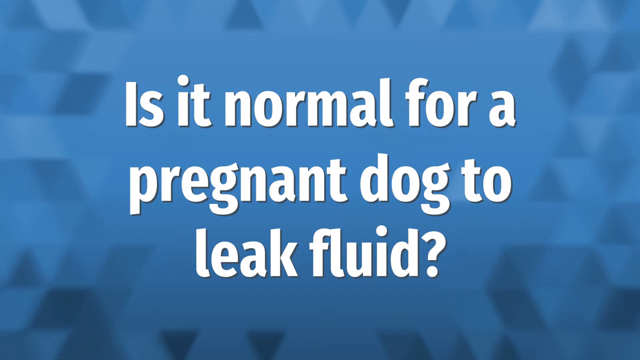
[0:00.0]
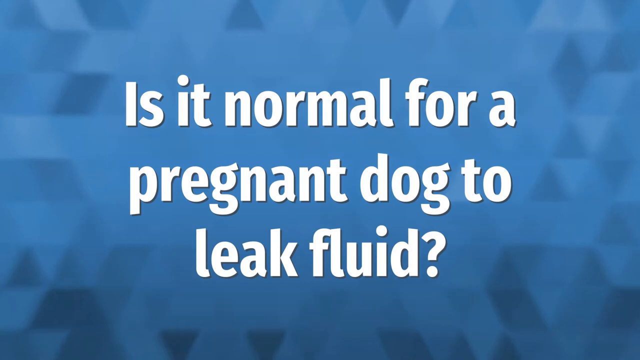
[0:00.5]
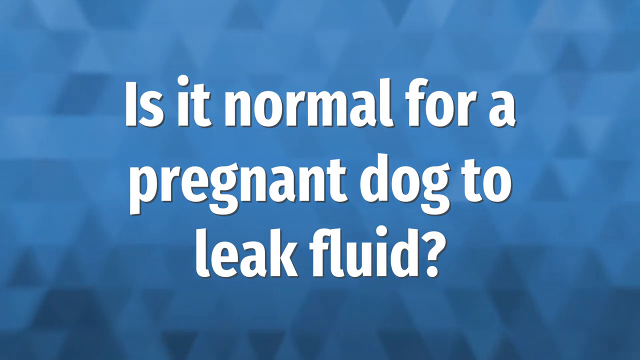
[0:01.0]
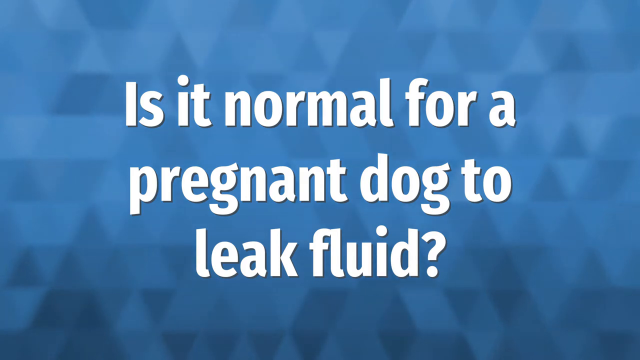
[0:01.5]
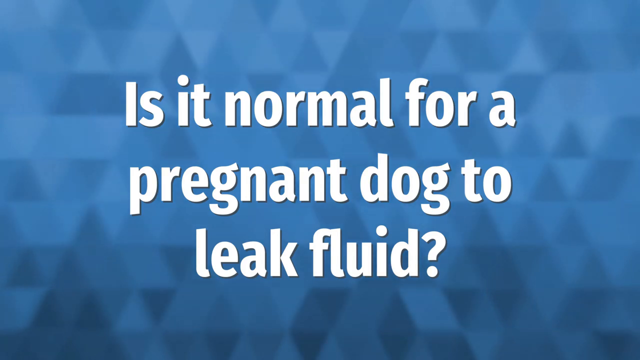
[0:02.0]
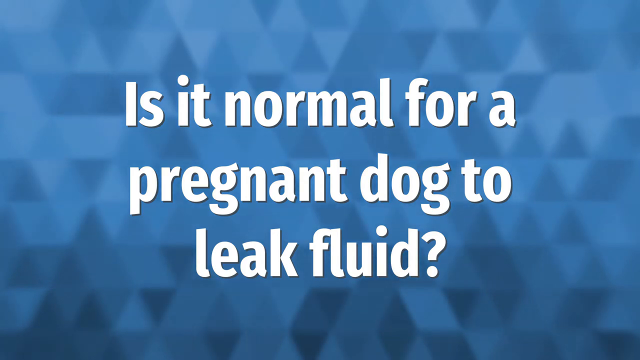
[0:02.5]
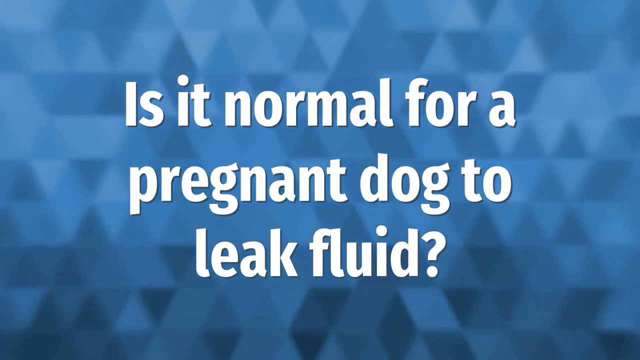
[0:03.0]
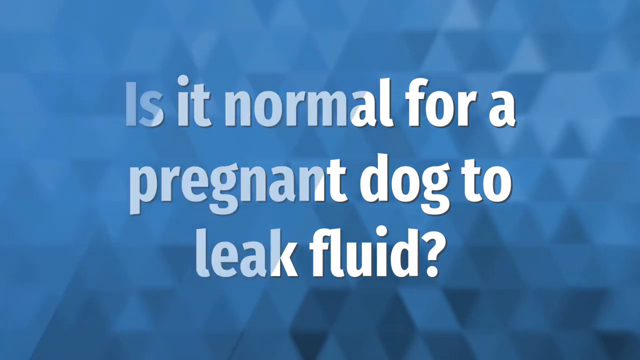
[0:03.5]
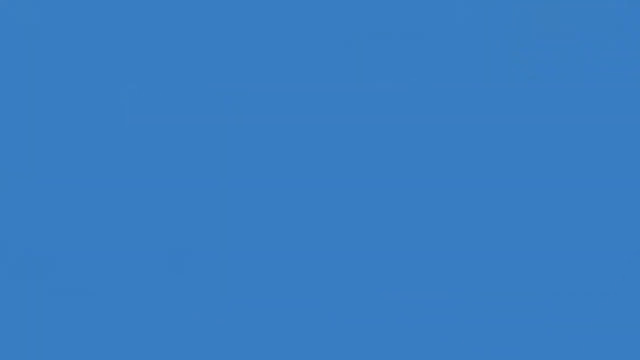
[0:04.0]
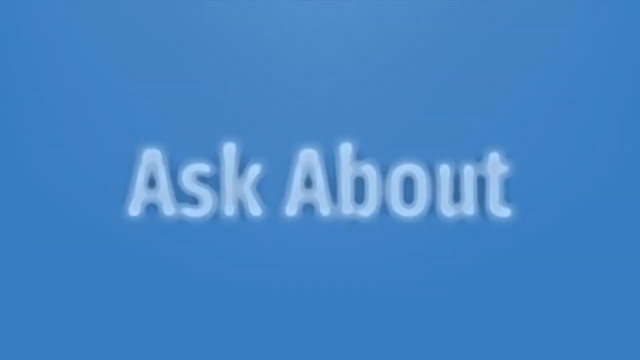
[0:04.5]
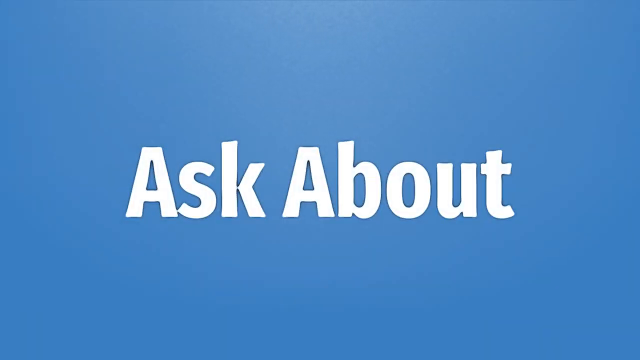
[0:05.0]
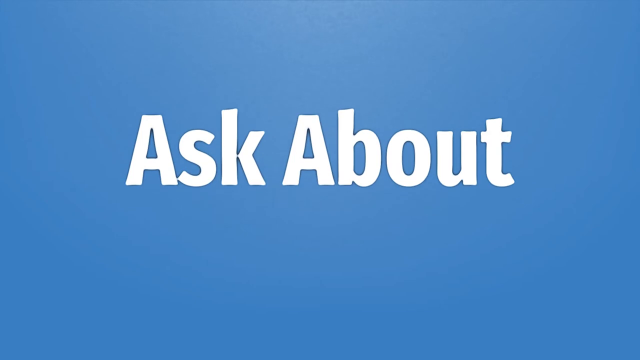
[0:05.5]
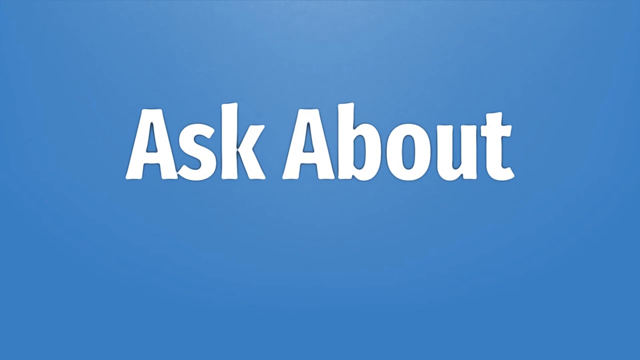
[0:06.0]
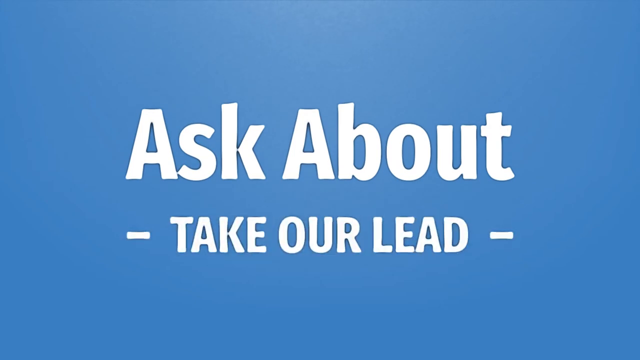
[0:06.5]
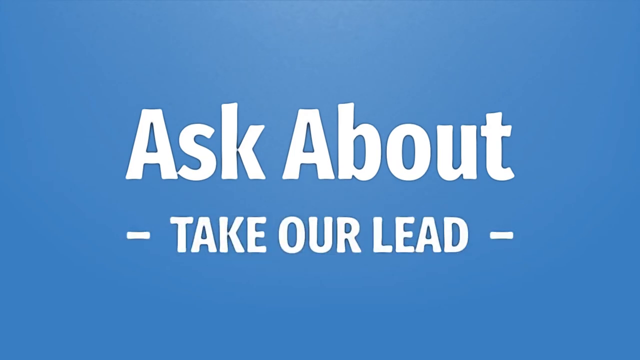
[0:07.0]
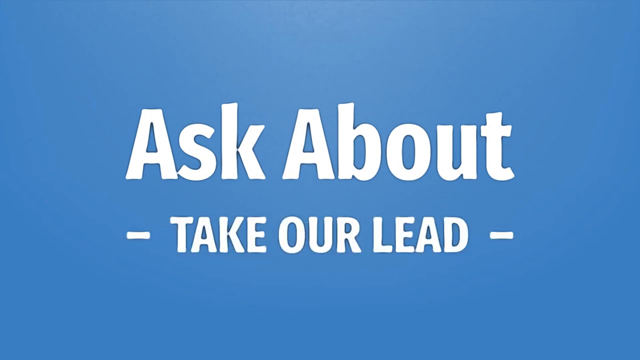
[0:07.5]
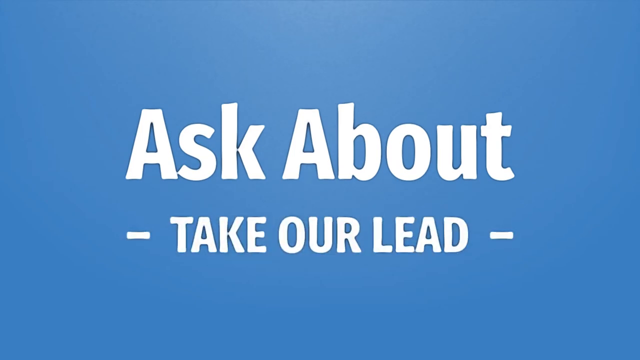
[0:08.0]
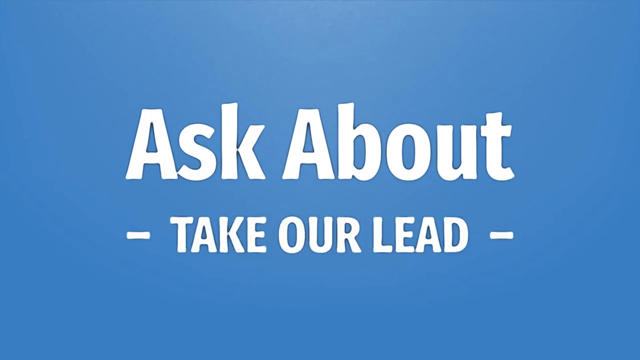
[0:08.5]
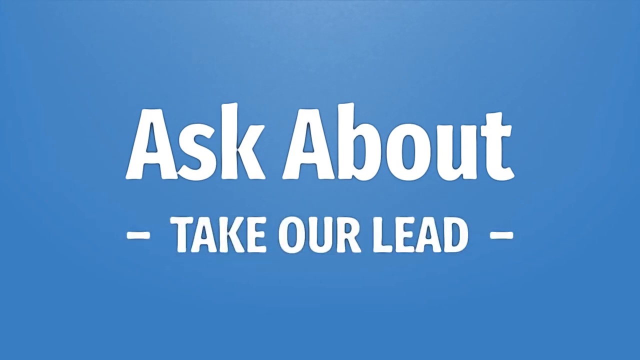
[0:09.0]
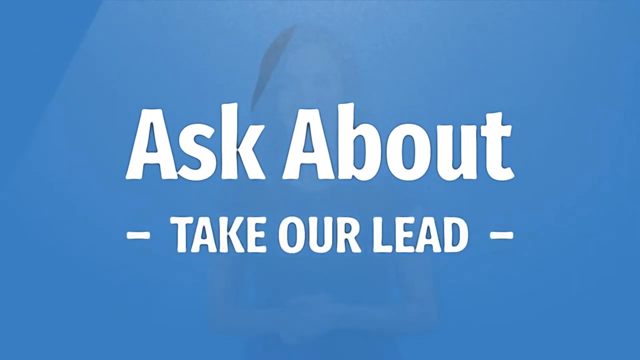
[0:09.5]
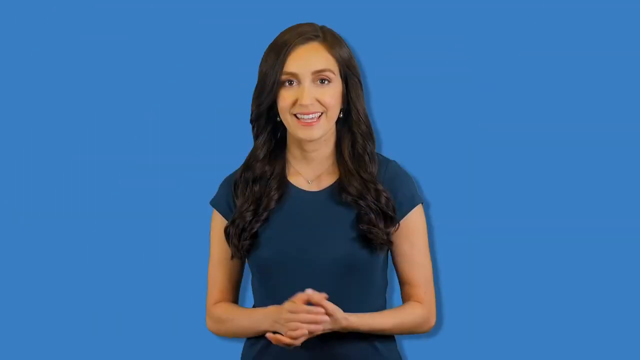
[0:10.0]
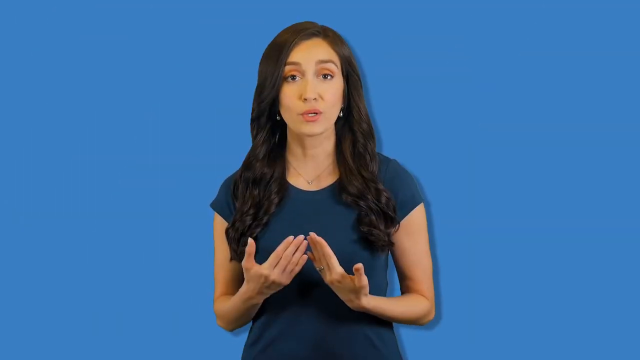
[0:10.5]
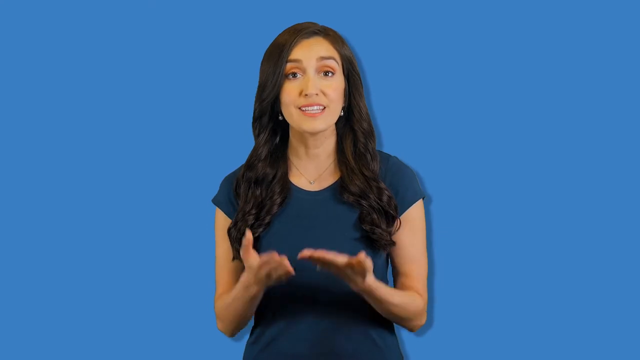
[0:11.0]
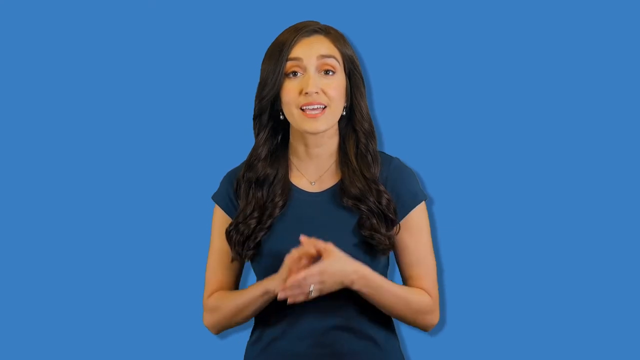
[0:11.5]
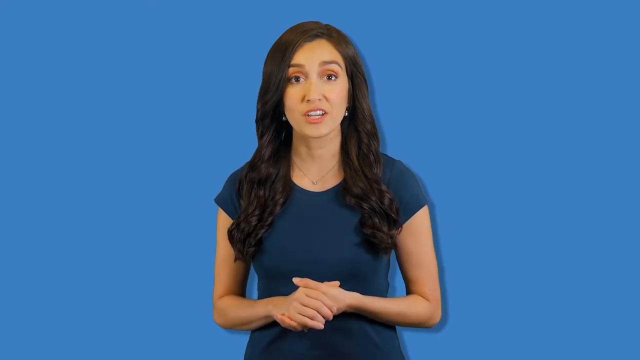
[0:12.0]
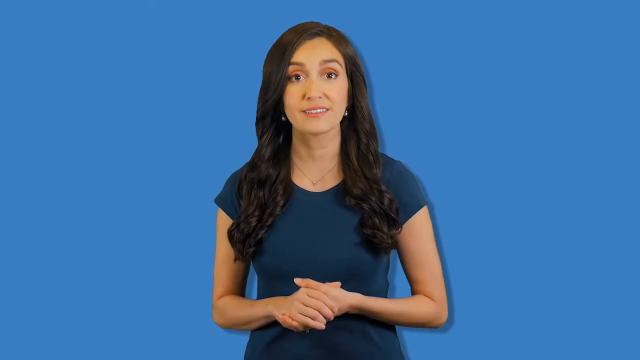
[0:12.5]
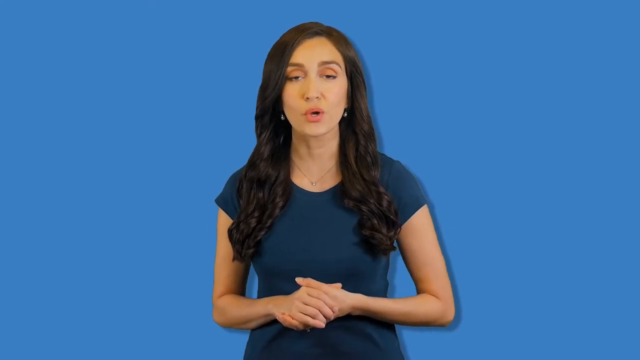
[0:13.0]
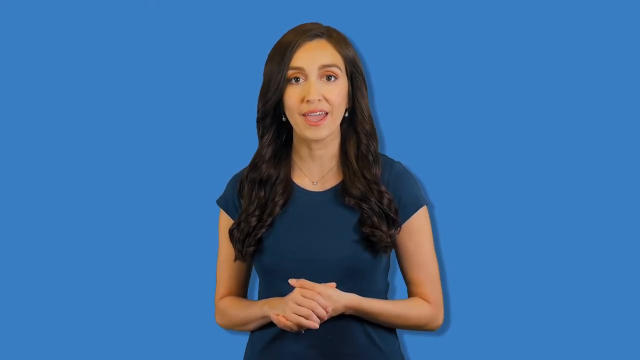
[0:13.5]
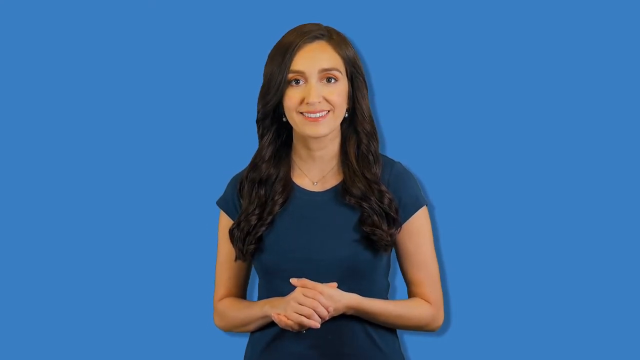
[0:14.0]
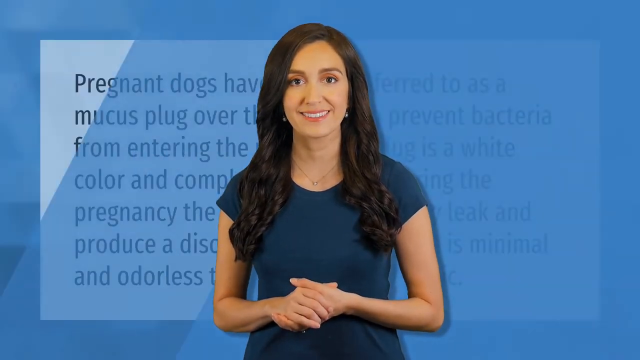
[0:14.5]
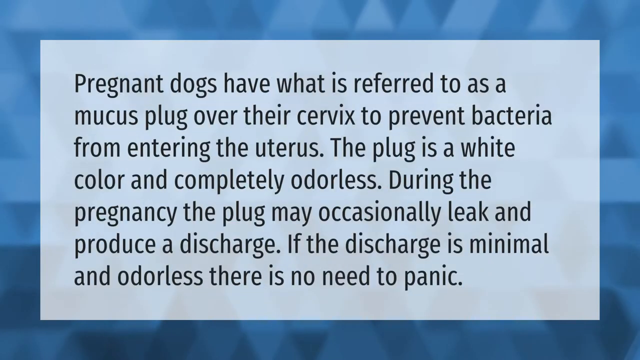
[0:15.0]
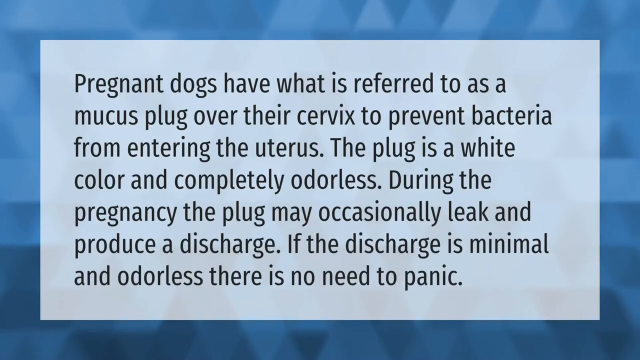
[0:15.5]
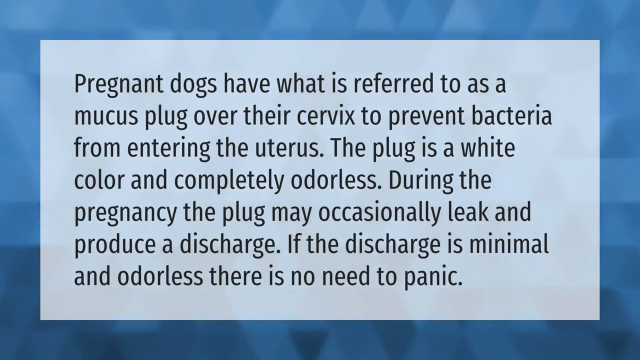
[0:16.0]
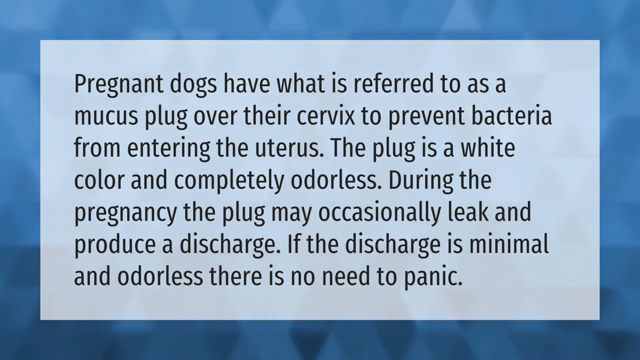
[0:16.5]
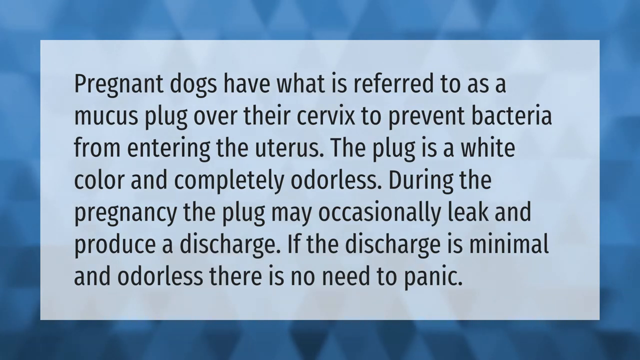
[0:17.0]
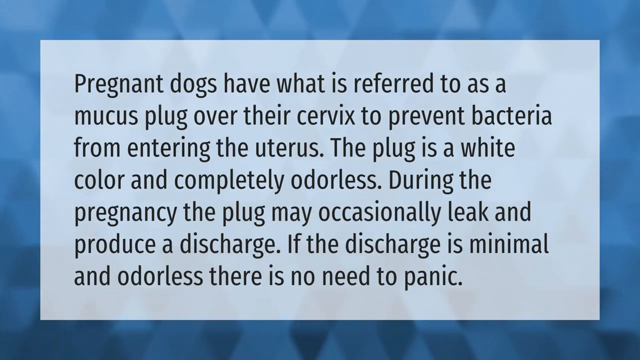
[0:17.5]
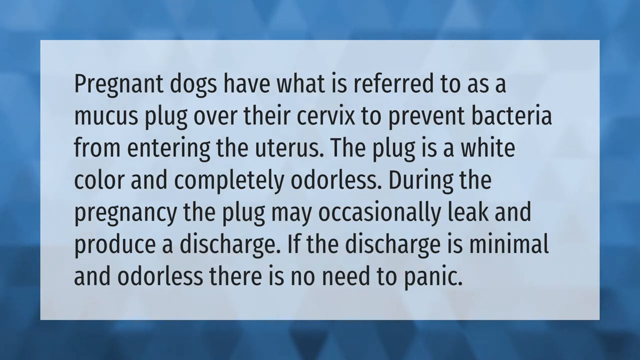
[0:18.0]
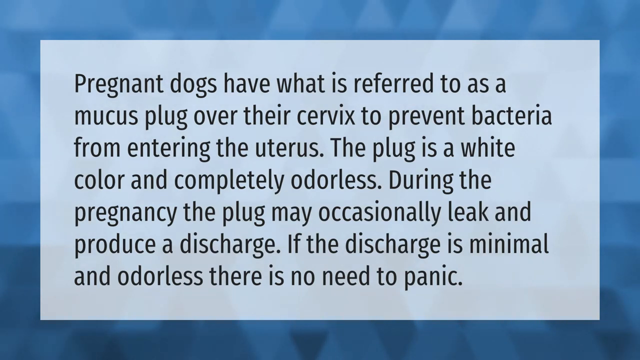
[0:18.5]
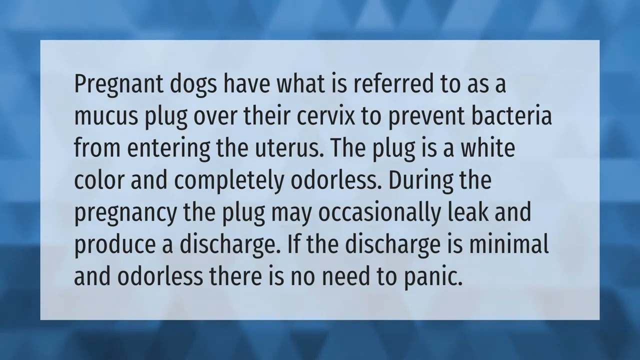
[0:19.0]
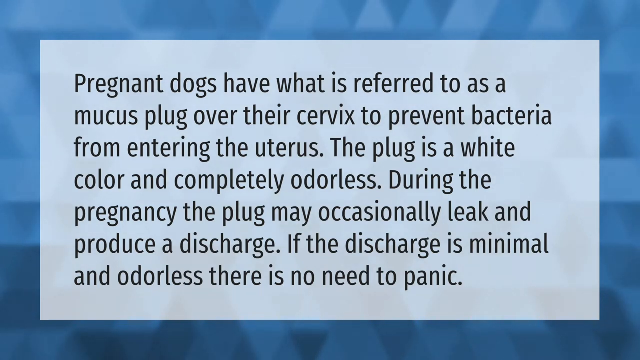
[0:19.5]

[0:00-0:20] The video opens on a blue screen with what looks like dark-colored diamonds and the text "is it normal for a pregnant dog to leak fluid?" It changes to a blue screen reading "asked about, take our lead," and then a woman with dark hair in a dark blue shirt appears, talking. The next screen has a blue background with a lighter blue screen in front, reading "pregnant dogs have what is referred to as a mucus plug over their cervix to prevent bacteria from entering the uterus. The plug is a white color and completely odorless. During the pregnancy, the plug may occasionally leak and produce a discharge. If the discharge is minimal and odorless, there is no need to panic."